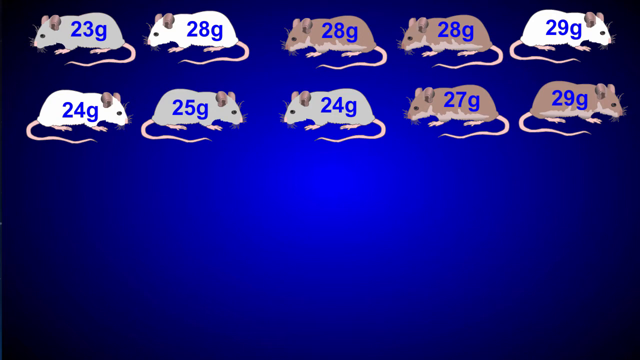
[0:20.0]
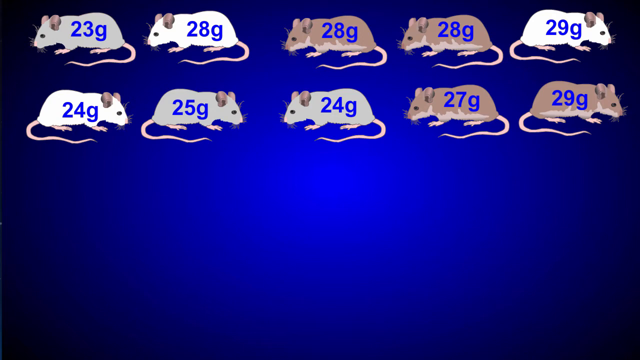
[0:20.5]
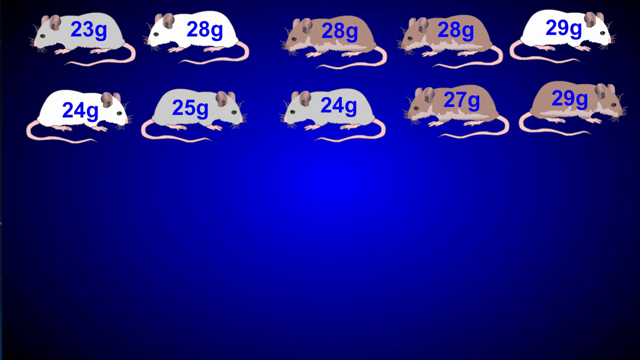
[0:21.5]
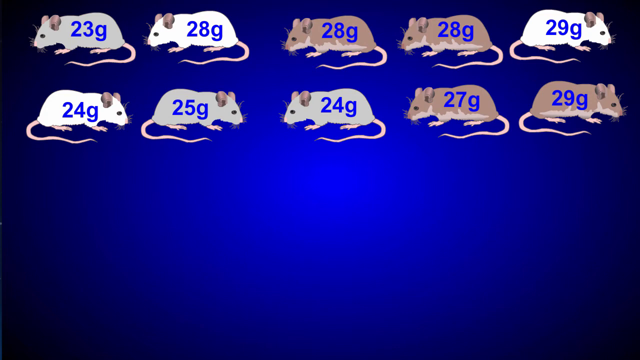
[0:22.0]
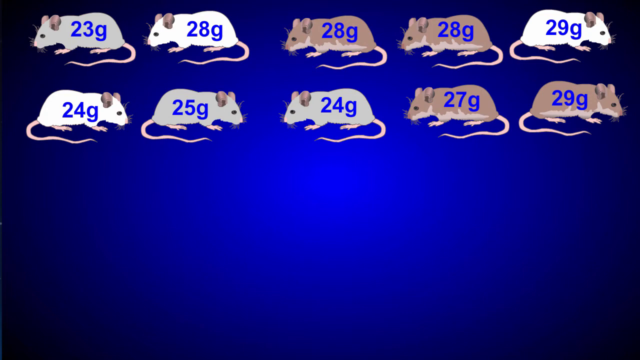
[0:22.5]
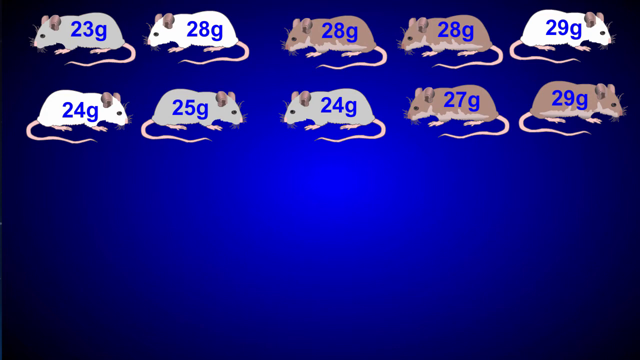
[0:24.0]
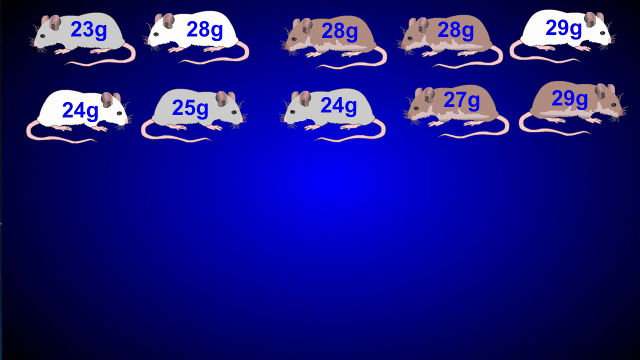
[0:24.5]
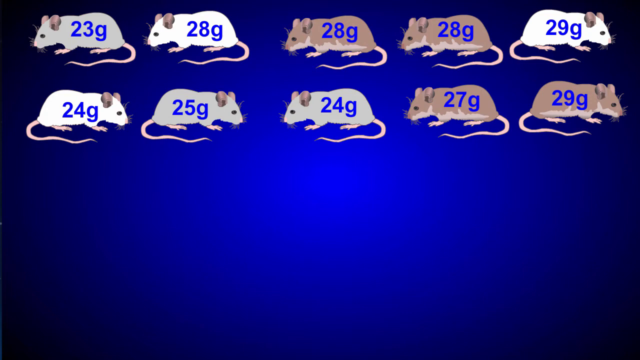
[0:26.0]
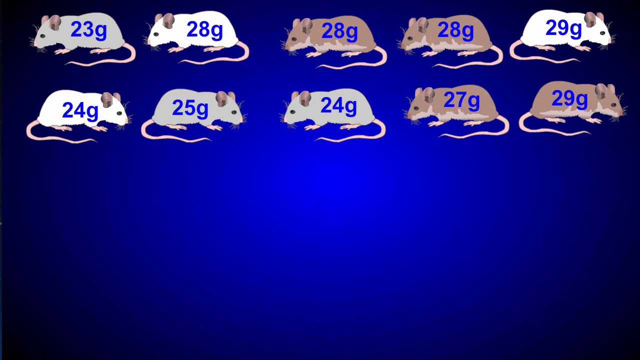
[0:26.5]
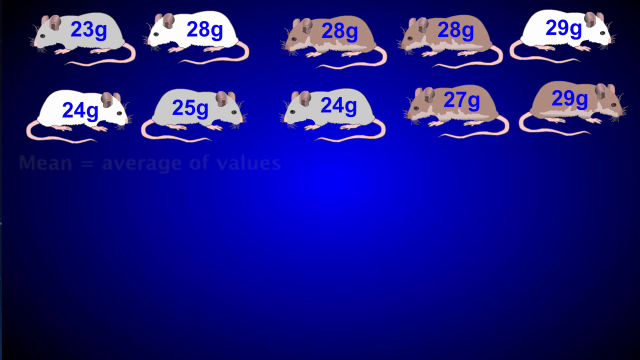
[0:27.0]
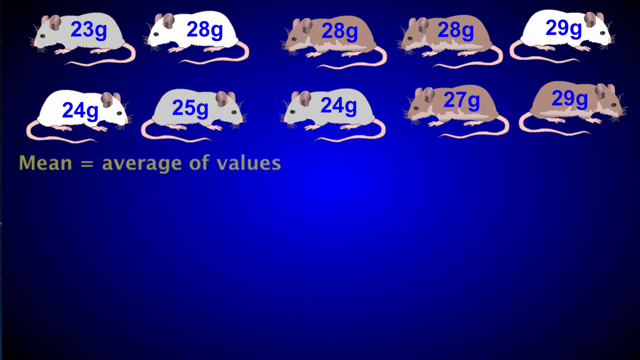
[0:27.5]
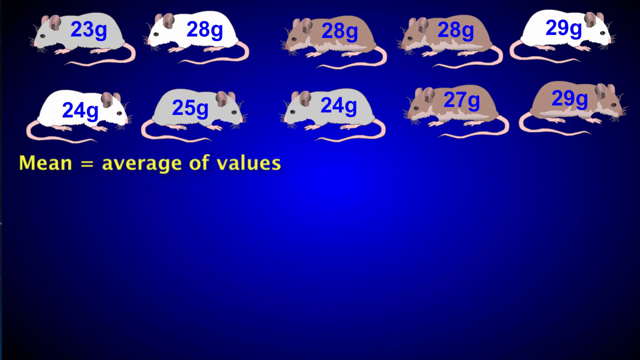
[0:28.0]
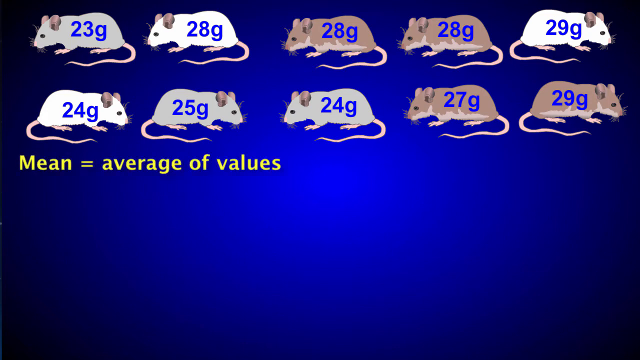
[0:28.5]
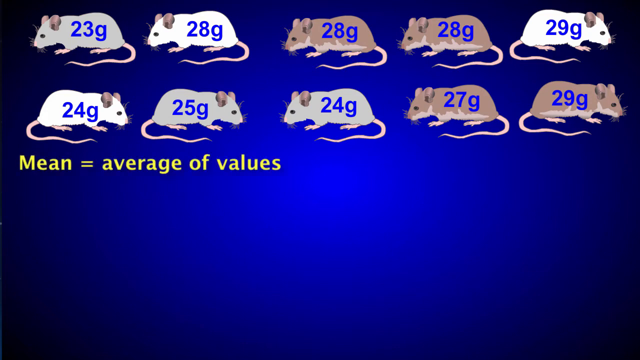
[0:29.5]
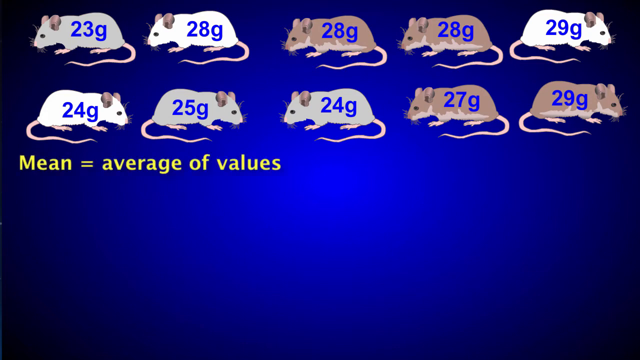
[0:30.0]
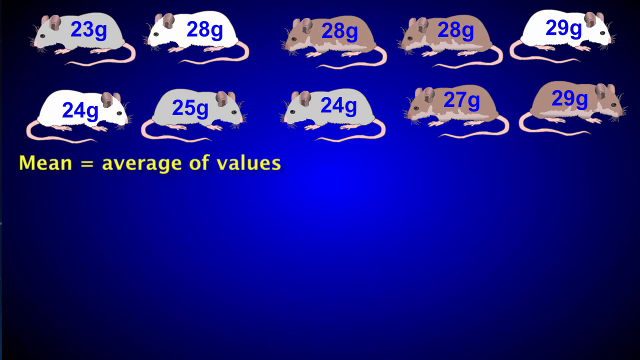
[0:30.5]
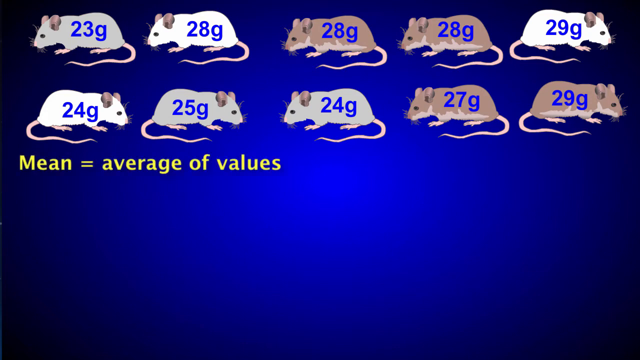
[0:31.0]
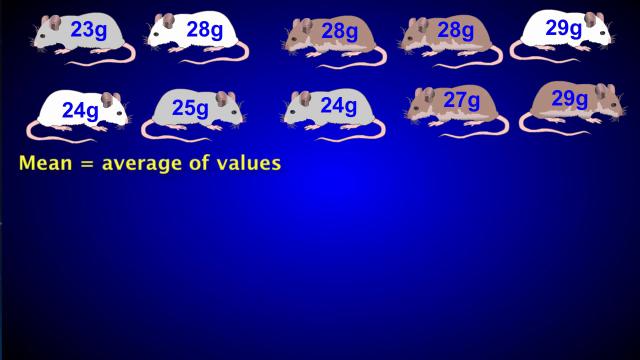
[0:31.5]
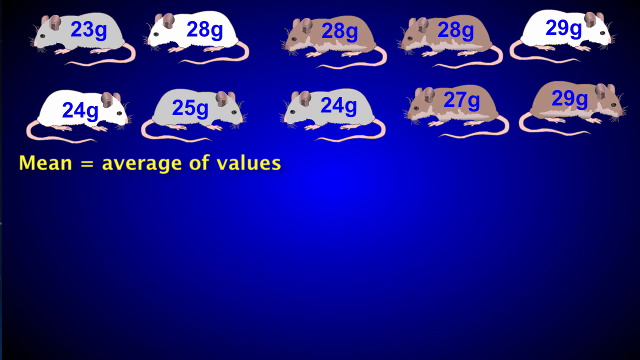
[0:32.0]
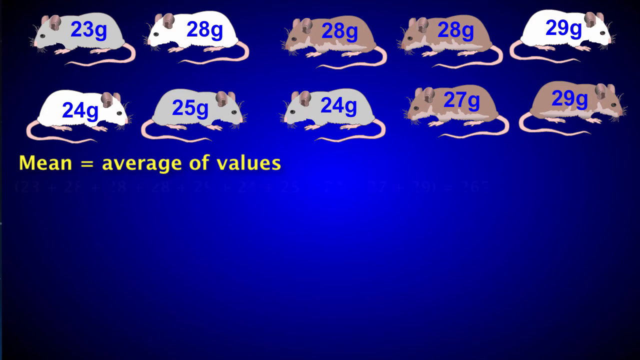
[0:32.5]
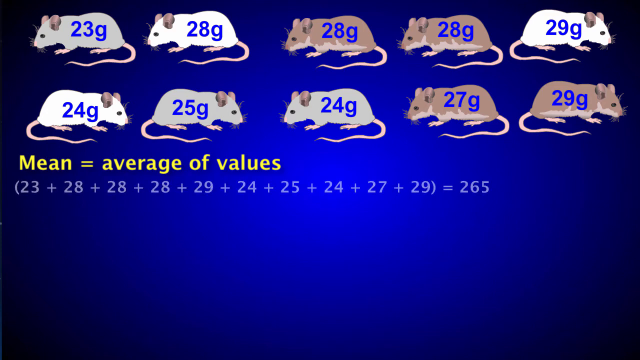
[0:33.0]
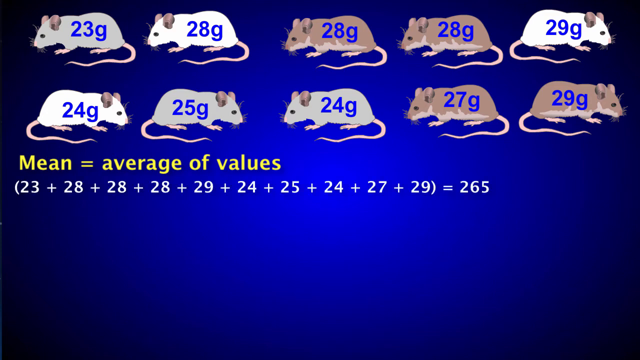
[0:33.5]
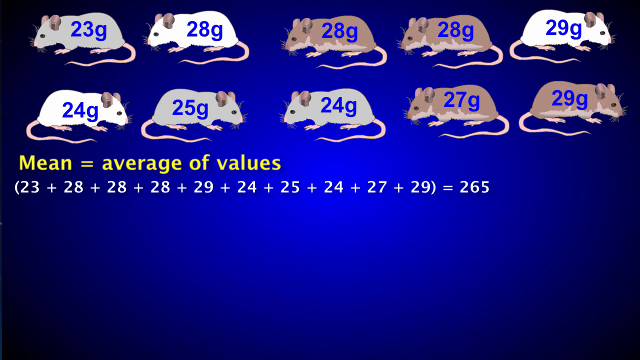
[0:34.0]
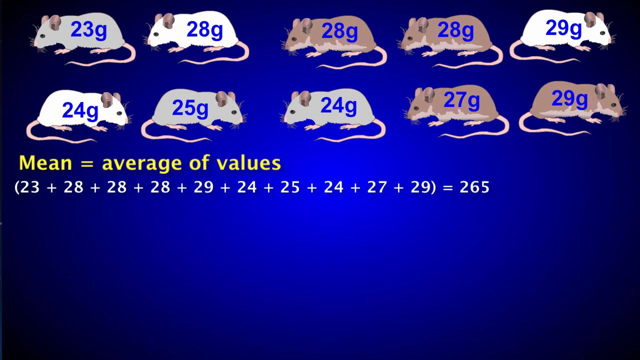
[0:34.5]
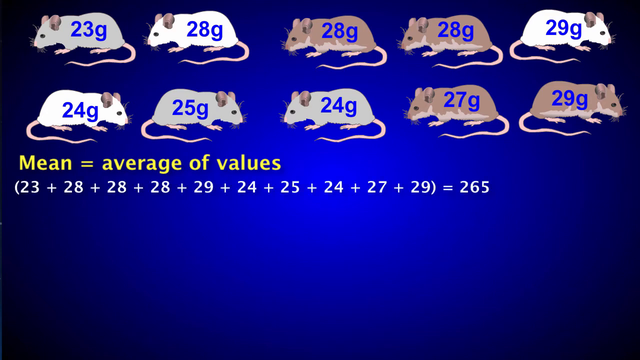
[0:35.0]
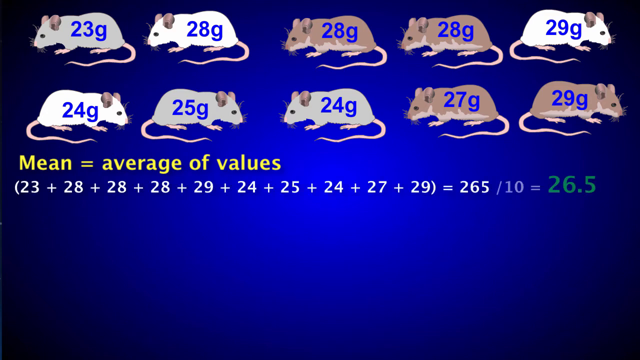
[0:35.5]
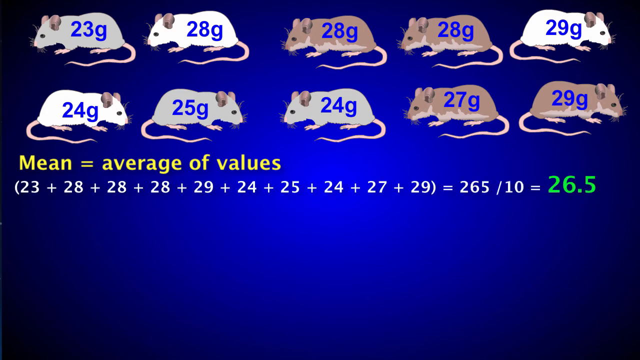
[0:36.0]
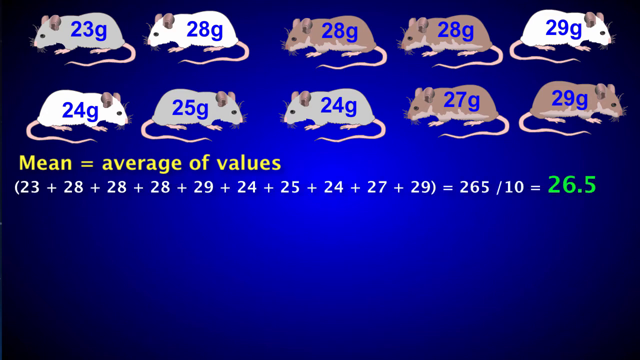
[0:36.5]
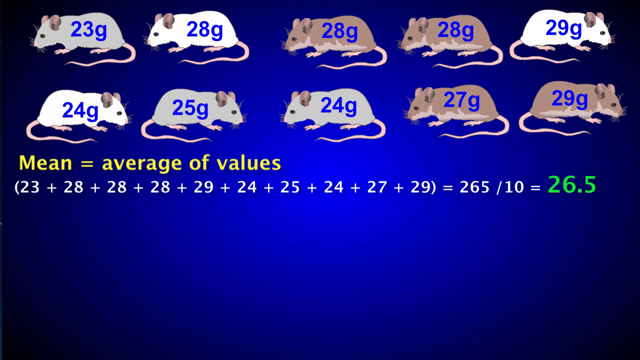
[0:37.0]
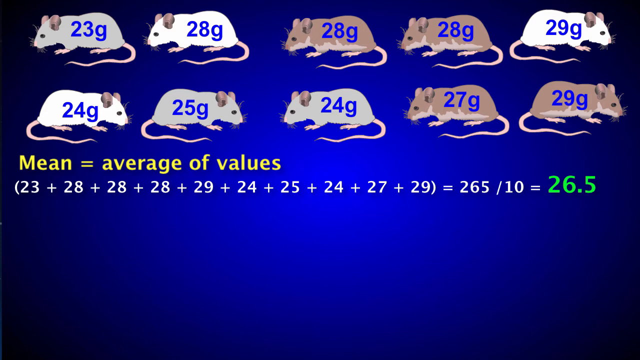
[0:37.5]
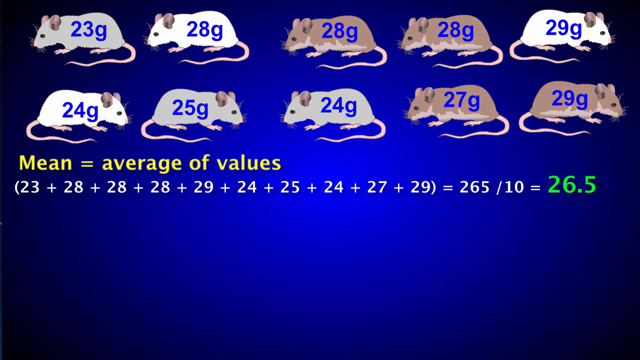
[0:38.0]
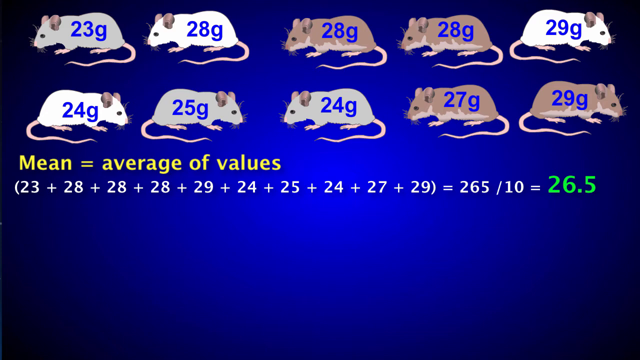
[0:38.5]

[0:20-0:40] A blue gradient screen shows cartoon mice, each with a different number on it: one mouse with 23 grams, two with 24 grams, one with 25 grams, two with 28 grams, one with 27 grams and two with 29 grams. The video teaches the meanings of mean, mode, median and range. The mean is defined as the average of values: the numbers 23, 28, 28, 28, 29, 24, 25, 24, 27 and 29 are added for a total of 265, which is divided by the number of mice, 10, giving an answer of 26½.